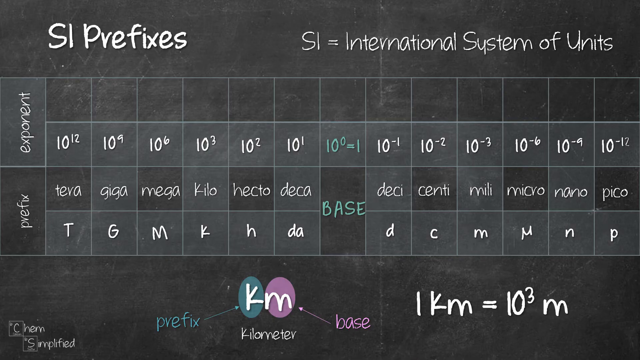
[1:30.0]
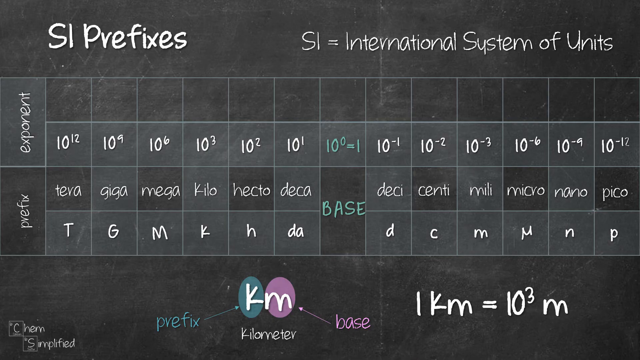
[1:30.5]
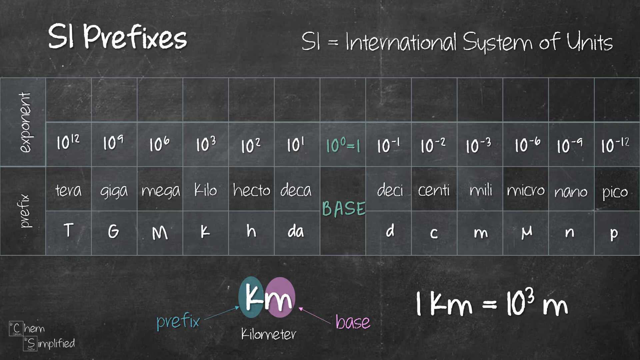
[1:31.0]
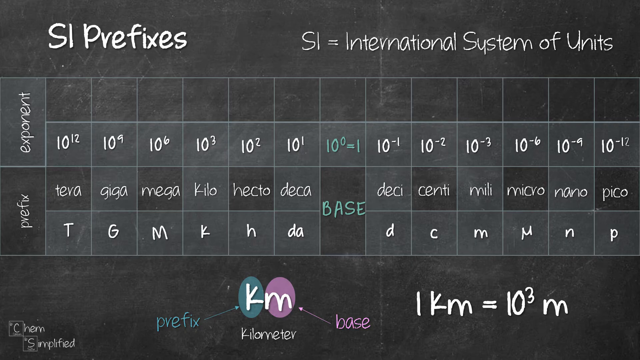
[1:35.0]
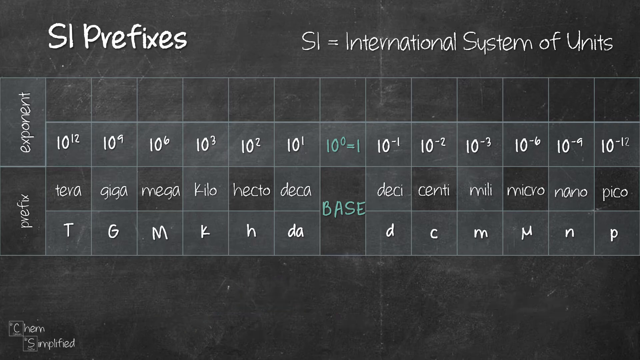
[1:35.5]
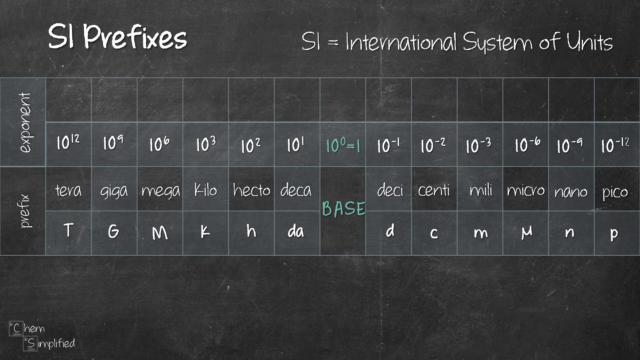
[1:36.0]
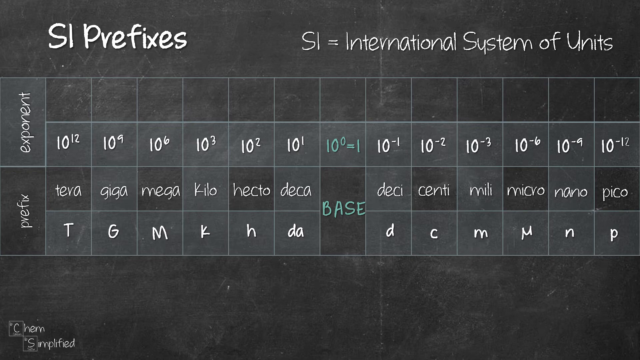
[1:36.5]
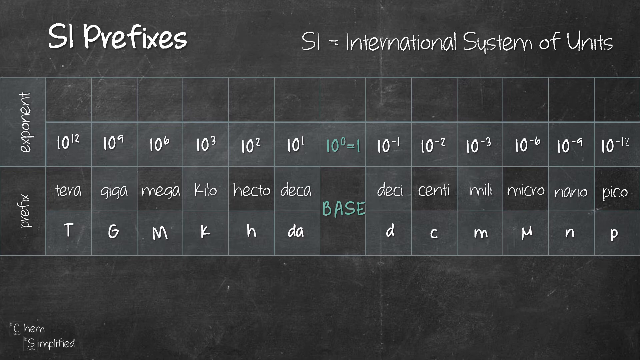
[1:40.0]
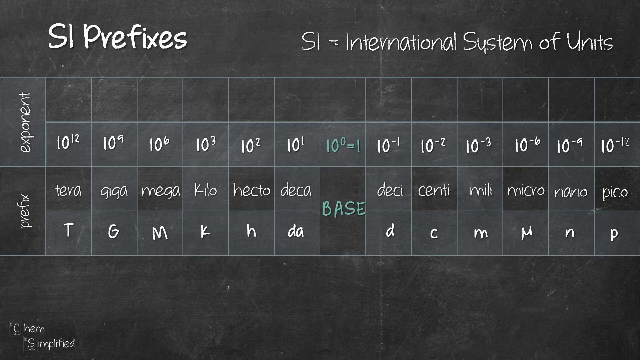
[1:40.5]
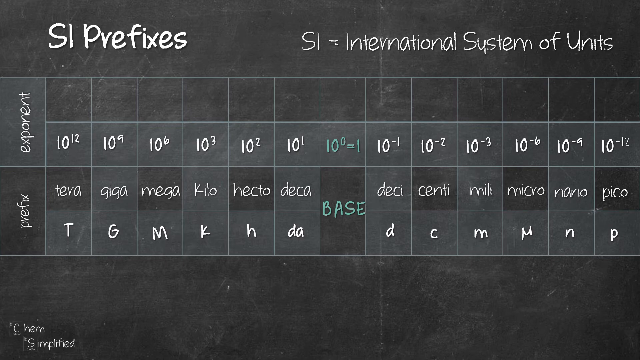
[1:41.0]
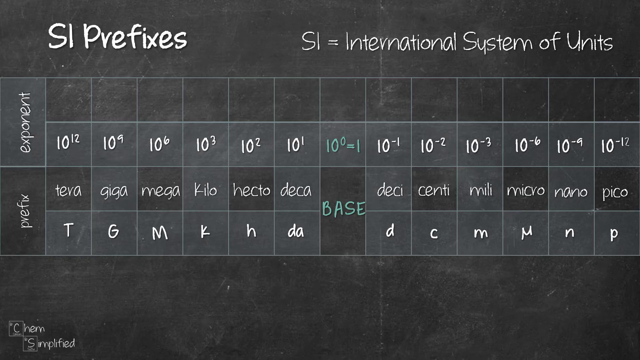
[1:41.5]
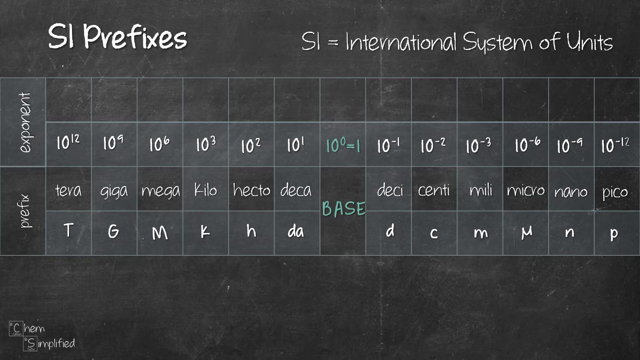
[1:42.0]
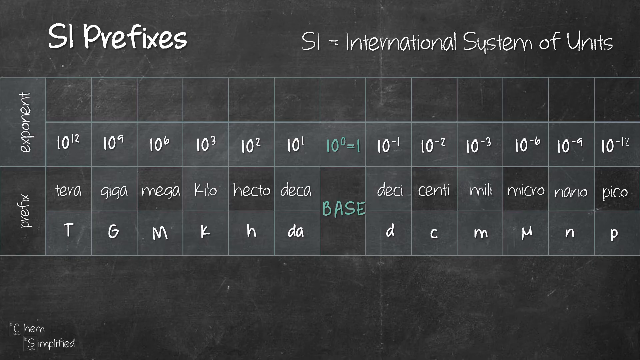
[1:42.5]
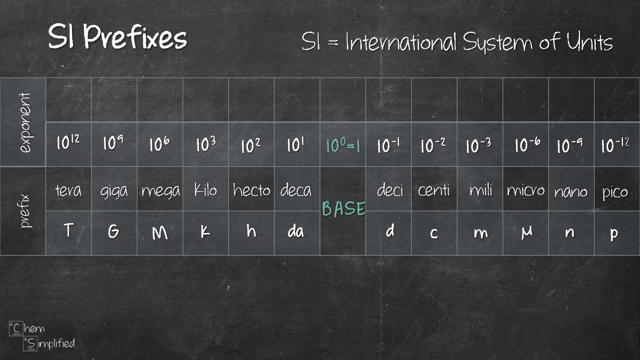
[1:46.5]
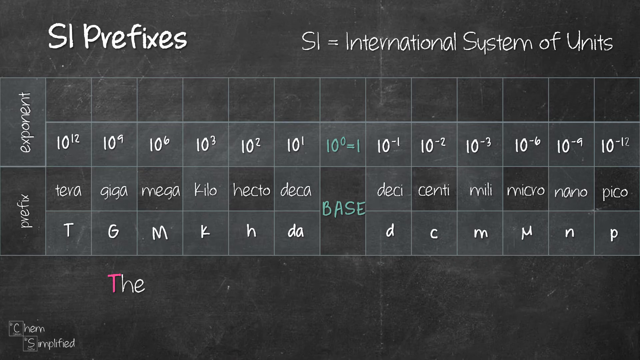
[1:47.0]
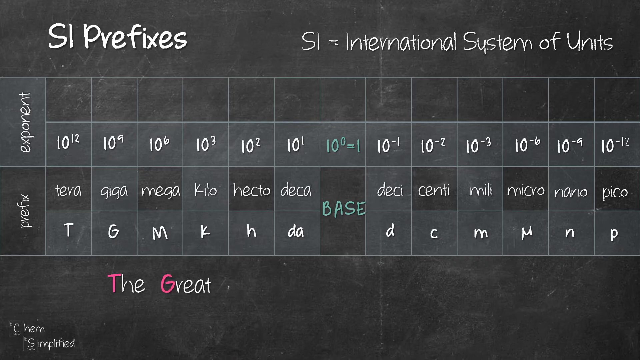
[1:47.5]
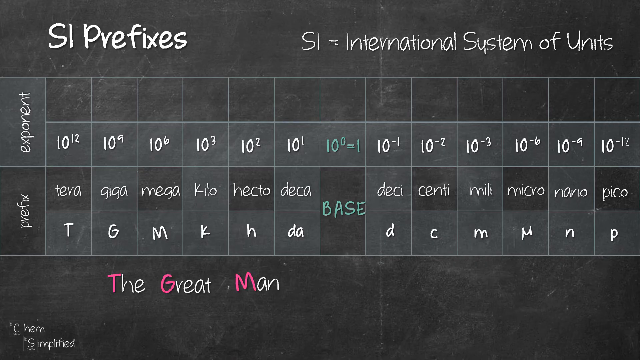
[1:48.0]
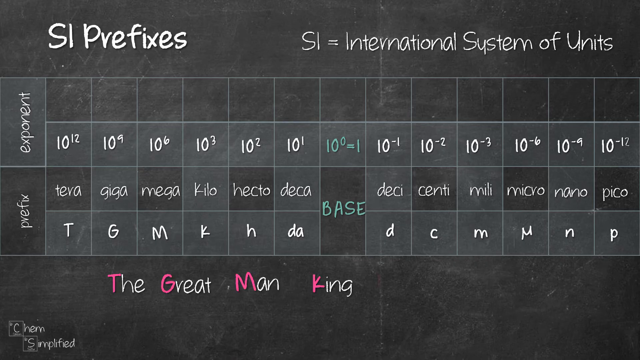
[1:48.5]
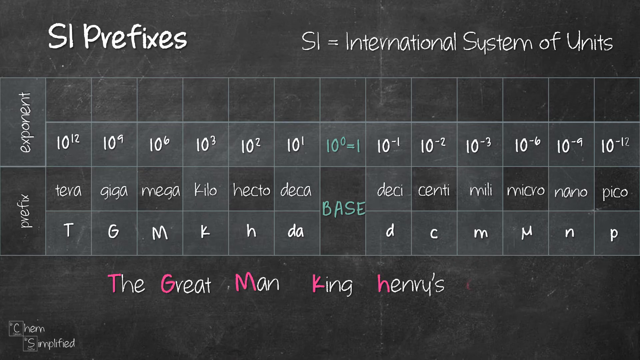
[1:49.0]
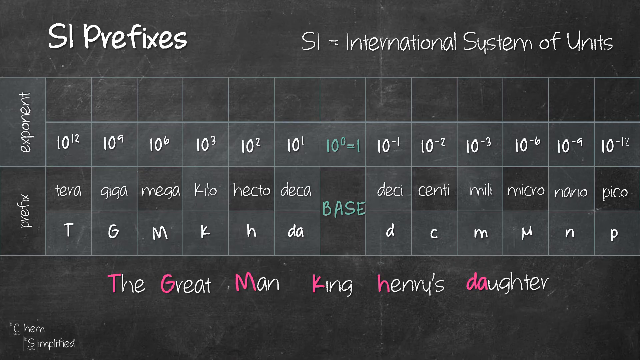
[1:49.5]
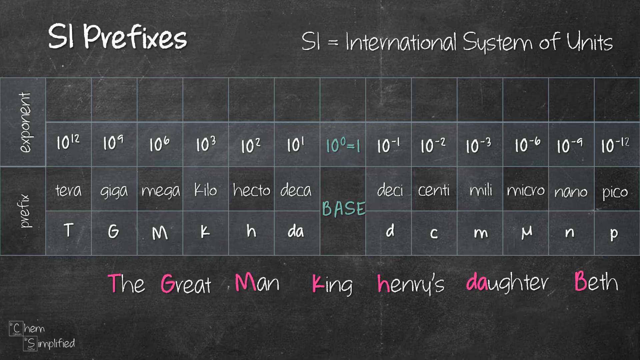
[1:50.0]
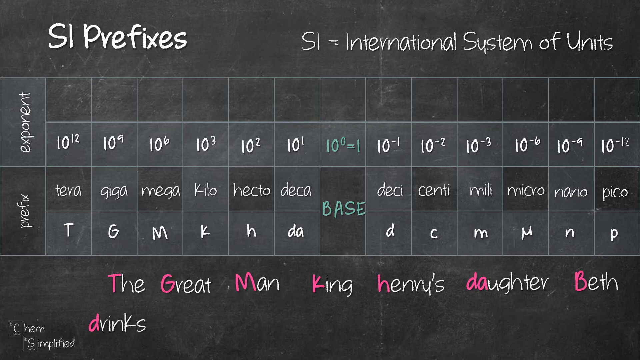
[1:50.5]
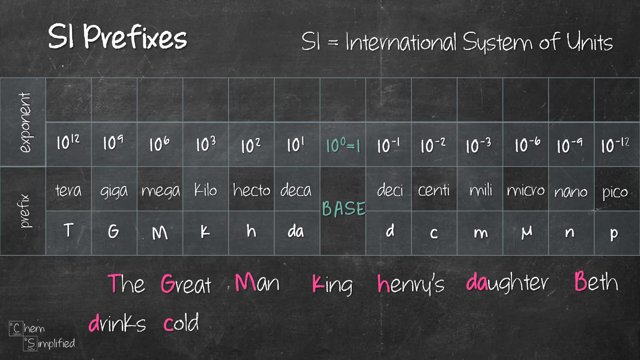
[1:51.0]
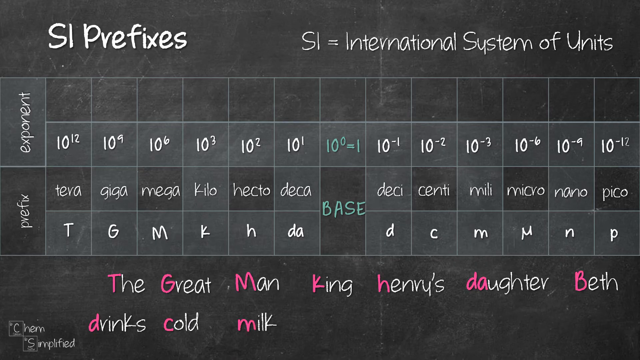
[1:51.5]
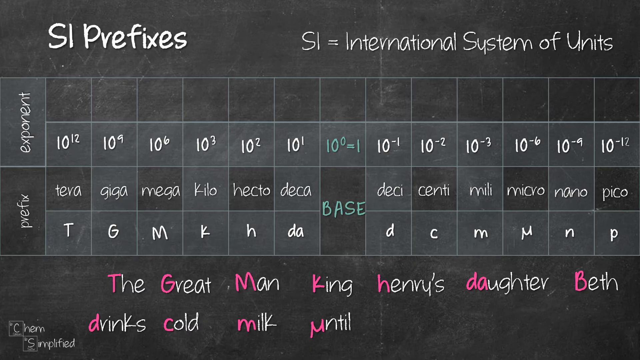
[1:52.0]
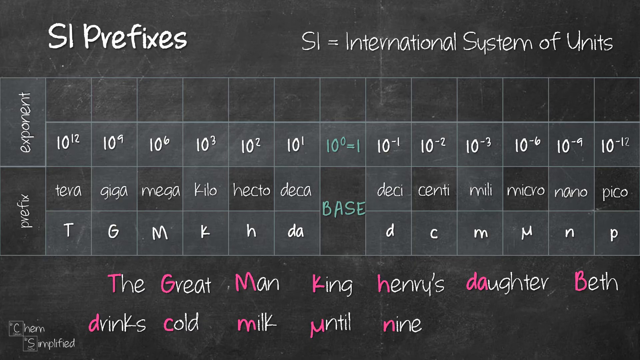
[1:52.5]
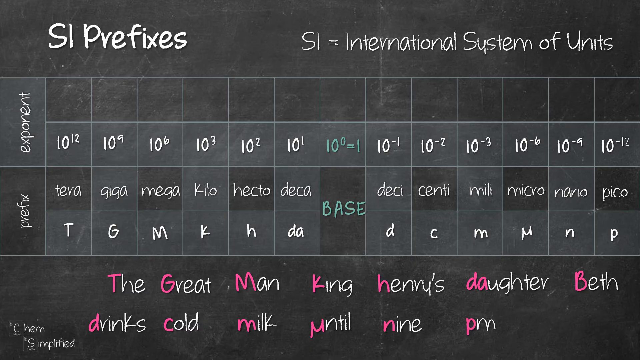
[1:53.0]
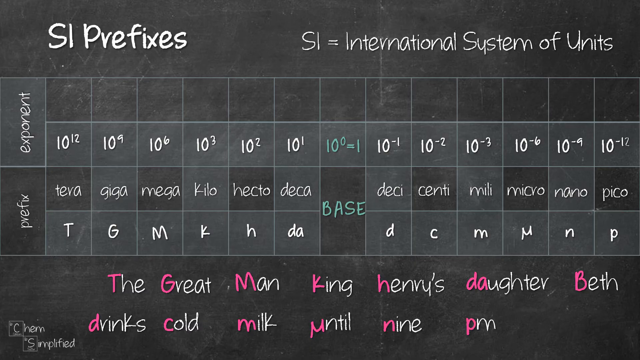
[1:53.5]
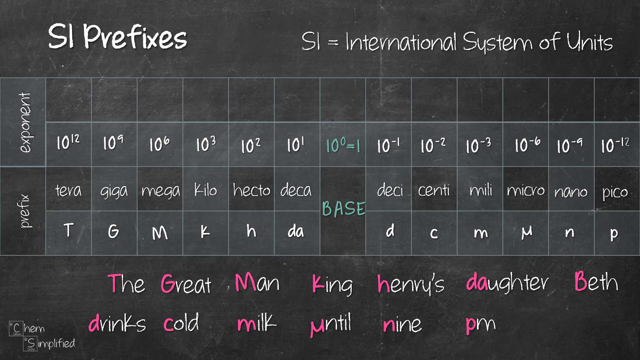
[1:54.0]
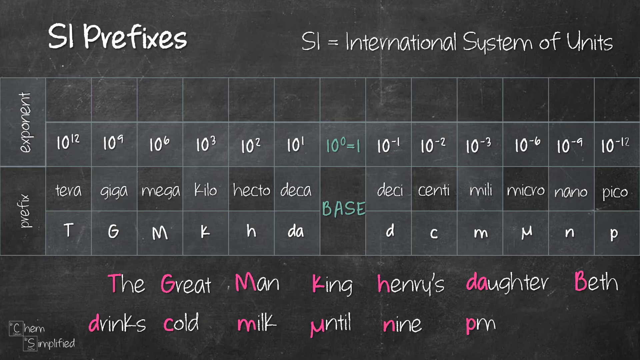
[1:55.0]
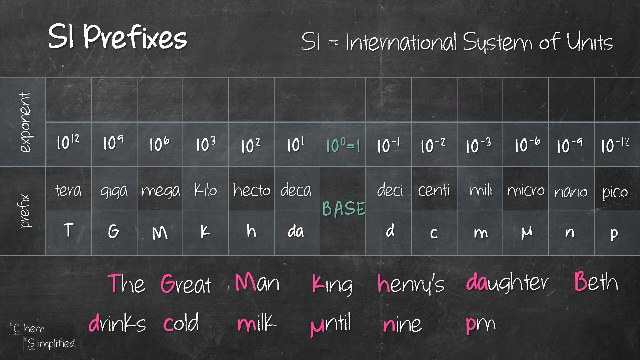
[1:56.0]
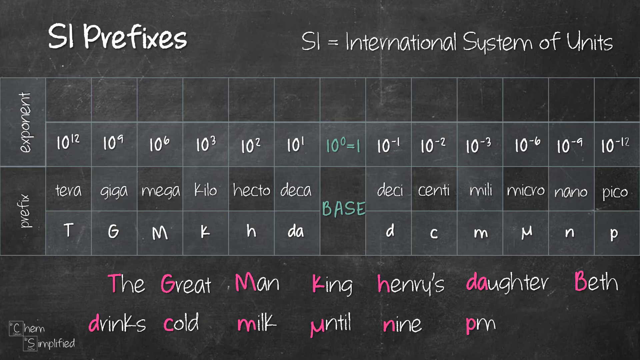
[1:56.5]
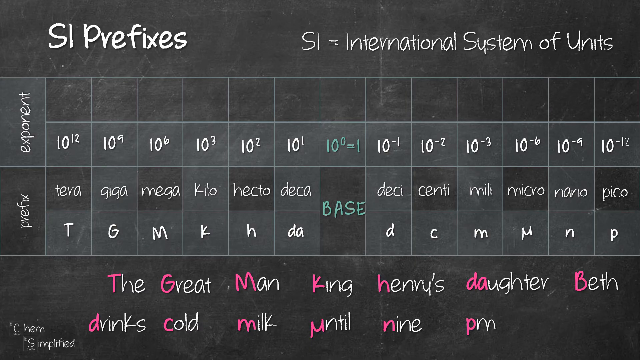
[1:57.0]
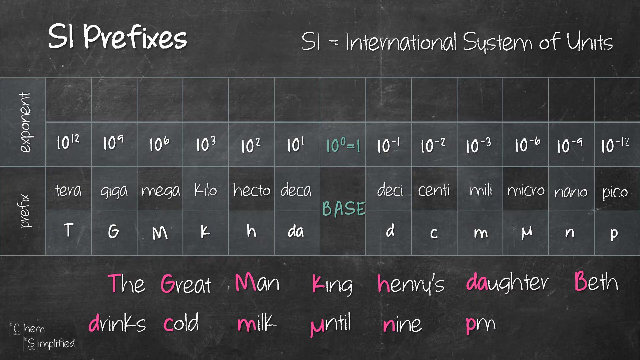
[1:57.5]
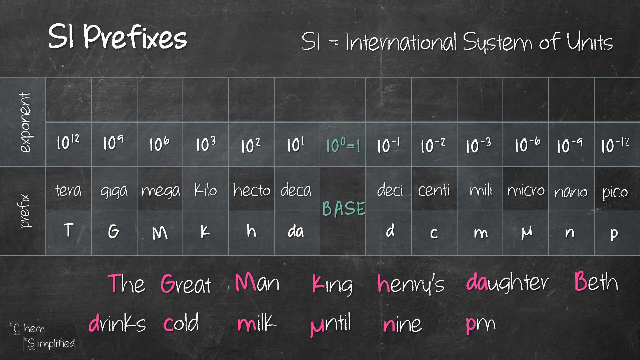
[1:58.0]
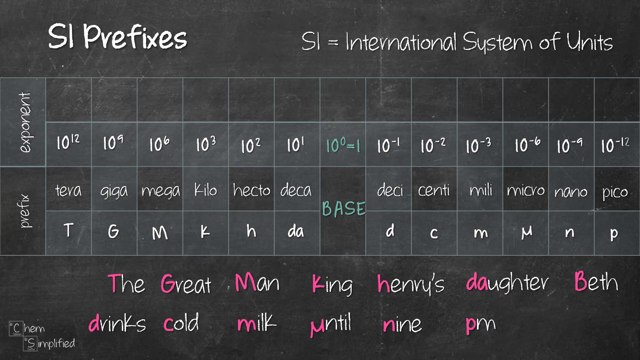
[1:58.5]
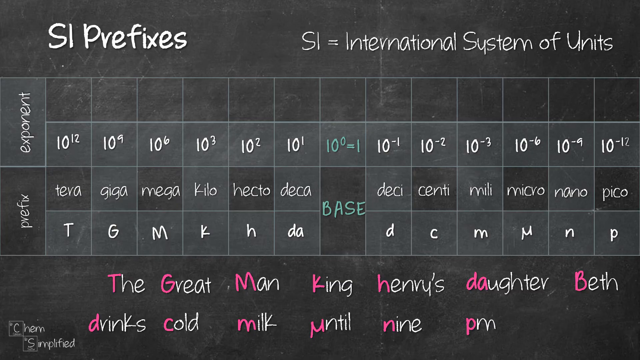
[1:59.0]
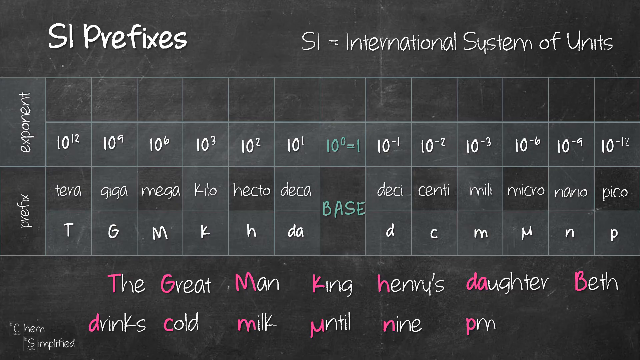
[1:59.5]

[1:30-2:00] A grid chart shows exponents compared to prefixes. Below it, information explains km, with K as the prefix, standing for kilo, and M as the base. It states that one km equals 10 to the third m. Above, the exponents corresponding to the prefixes run in order: 10 to the 12th, 10 to the 9th, 10 to the 6th, 10 to the 3rd, 10 to the 2nd, 10 to the 1st, and after the base, 10 to the negative 1, 10 to the negative 2, 10 to the negative 3, 10 to the negative 6, 10 to the negative 9 and 10 to the negative 12 for pico.